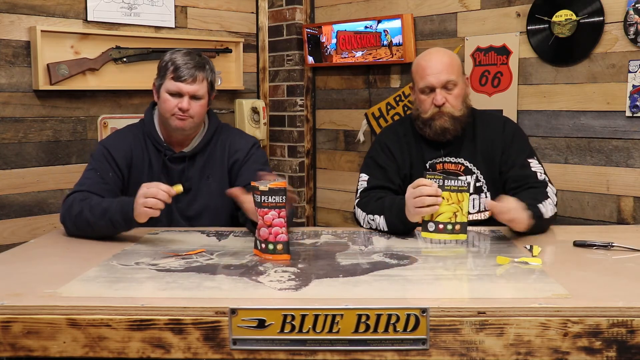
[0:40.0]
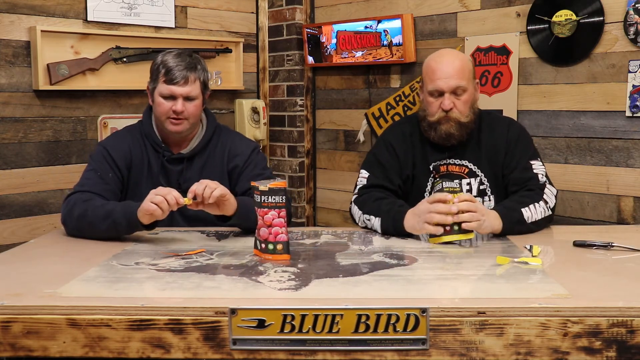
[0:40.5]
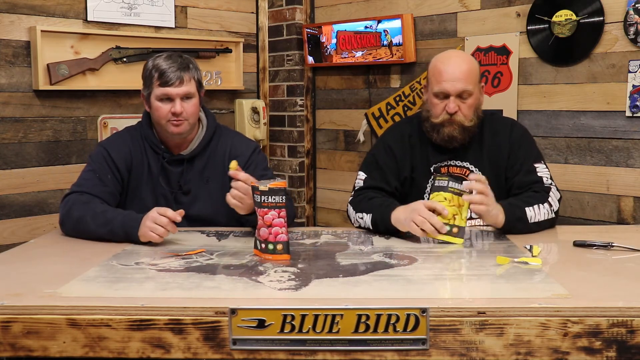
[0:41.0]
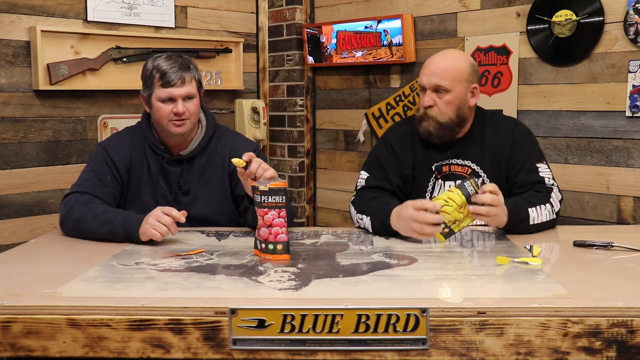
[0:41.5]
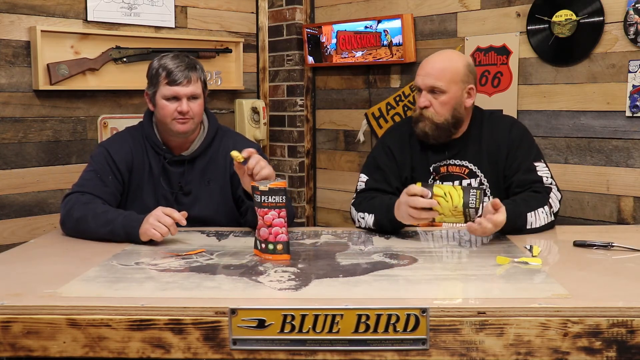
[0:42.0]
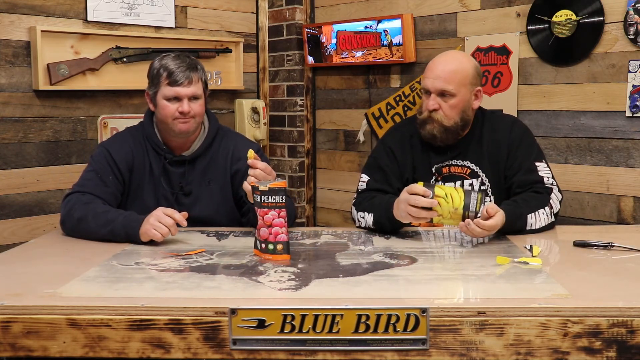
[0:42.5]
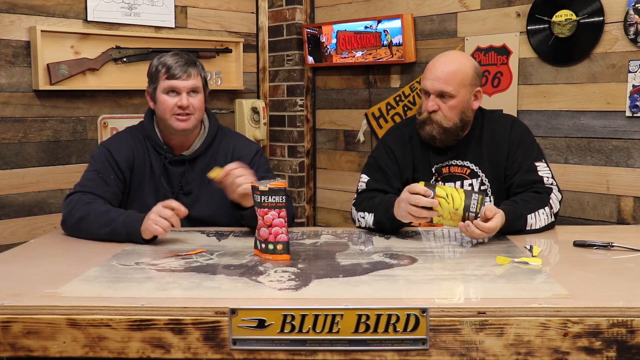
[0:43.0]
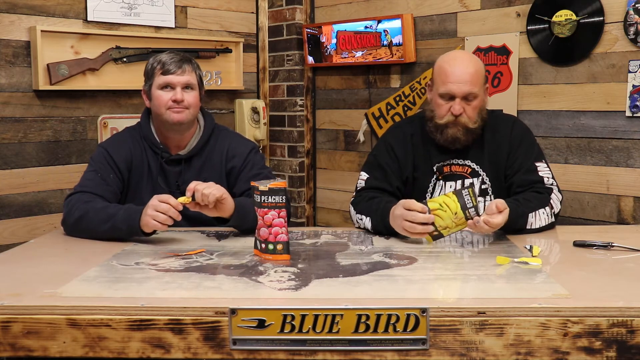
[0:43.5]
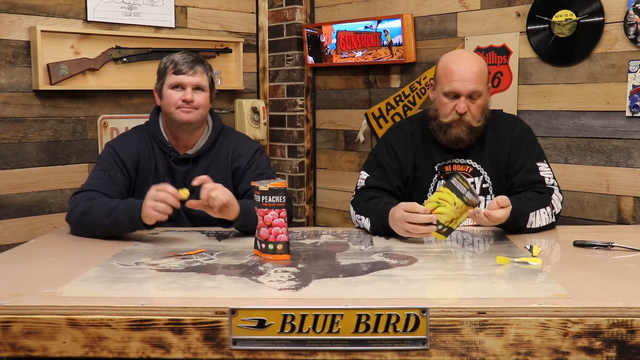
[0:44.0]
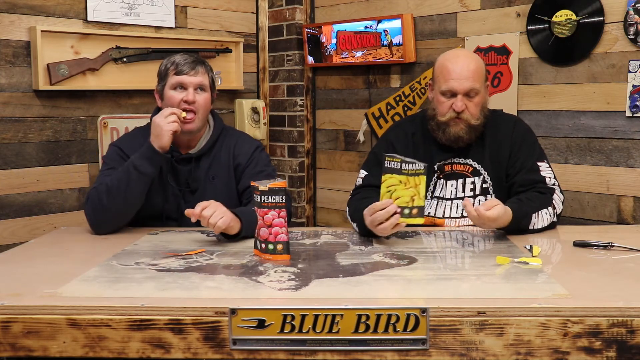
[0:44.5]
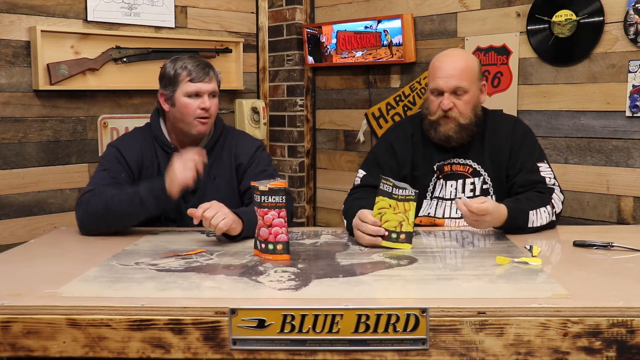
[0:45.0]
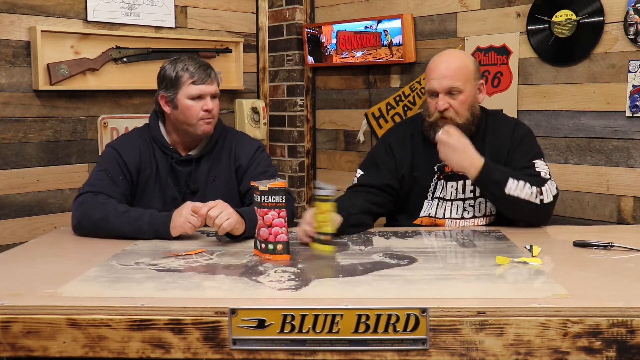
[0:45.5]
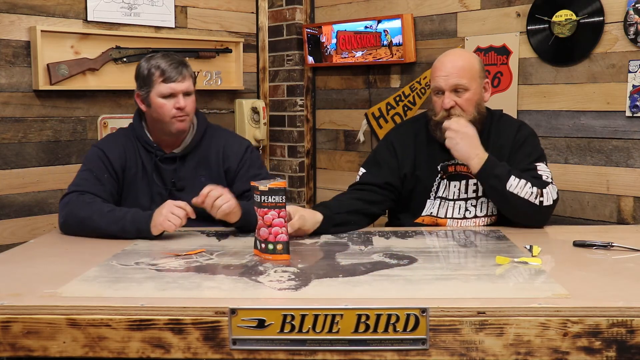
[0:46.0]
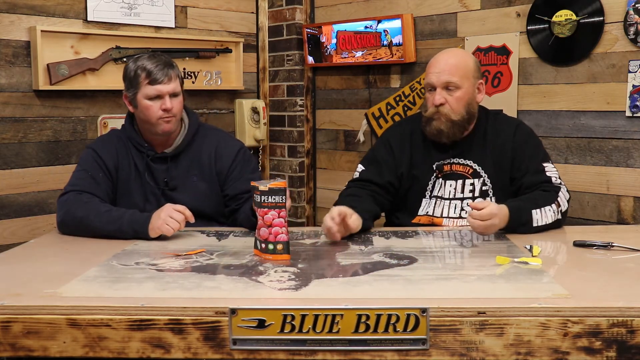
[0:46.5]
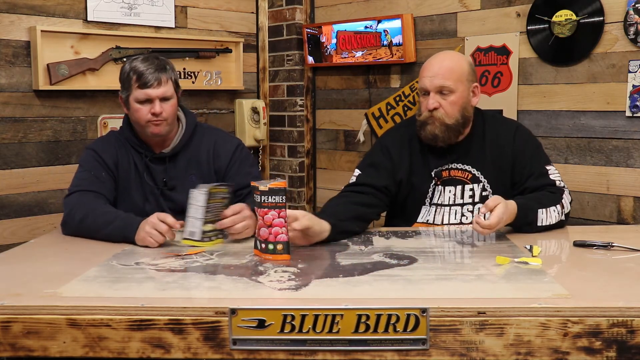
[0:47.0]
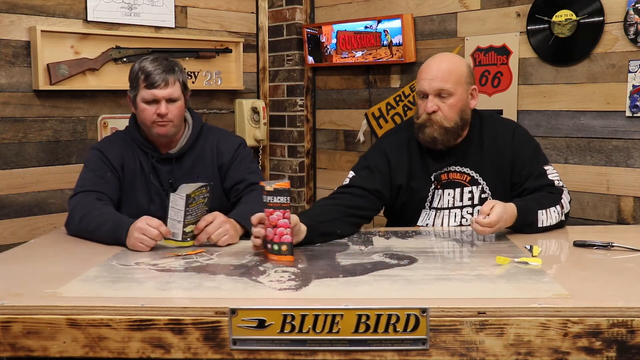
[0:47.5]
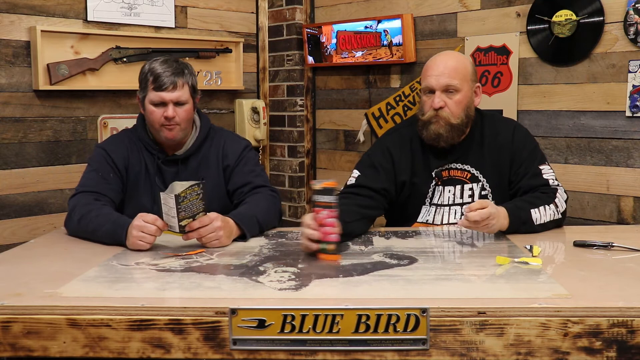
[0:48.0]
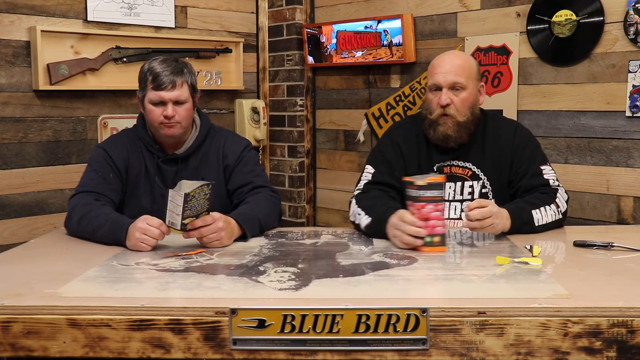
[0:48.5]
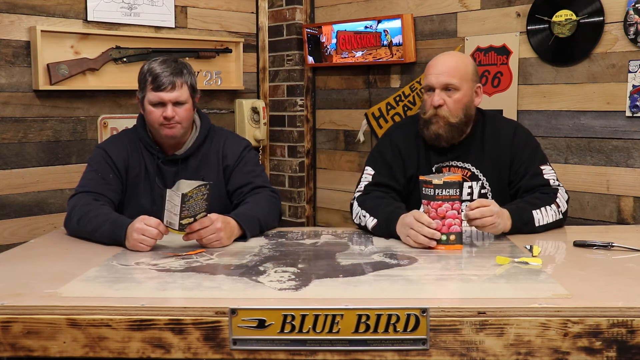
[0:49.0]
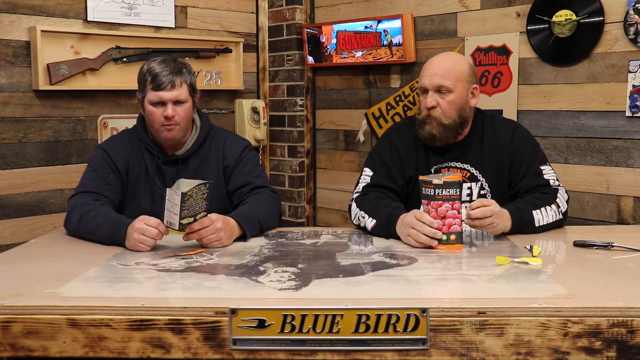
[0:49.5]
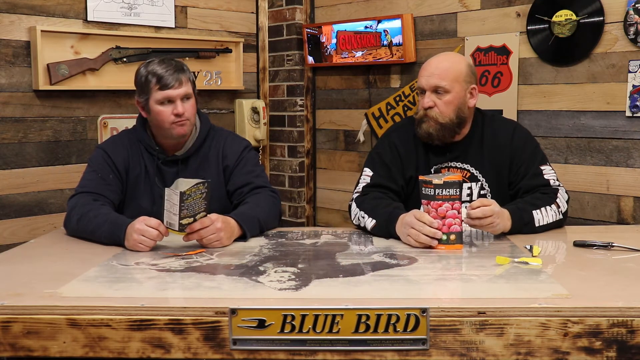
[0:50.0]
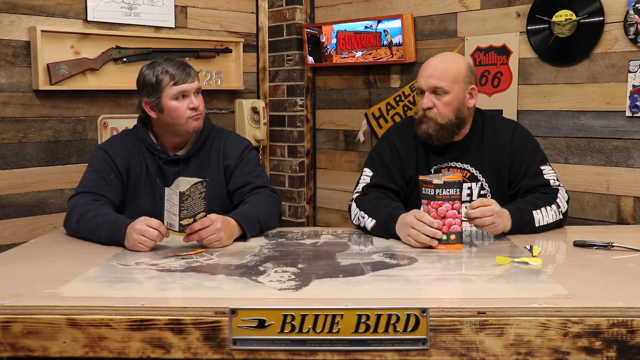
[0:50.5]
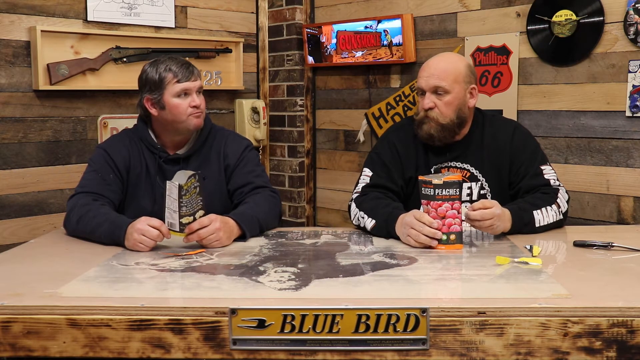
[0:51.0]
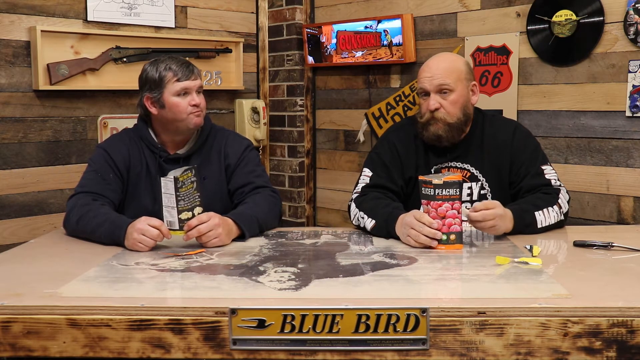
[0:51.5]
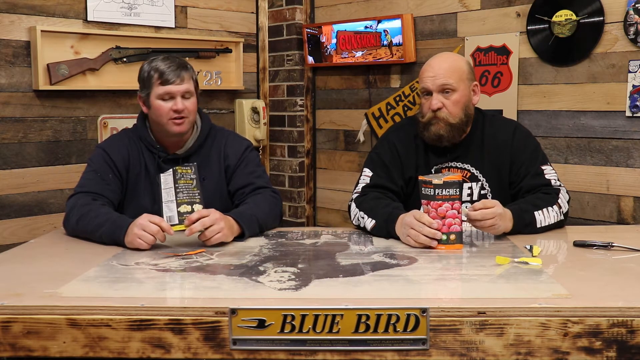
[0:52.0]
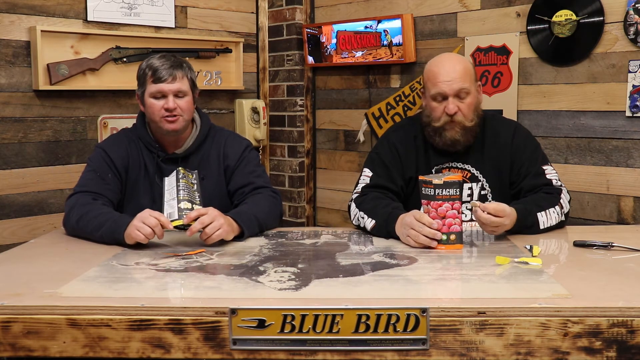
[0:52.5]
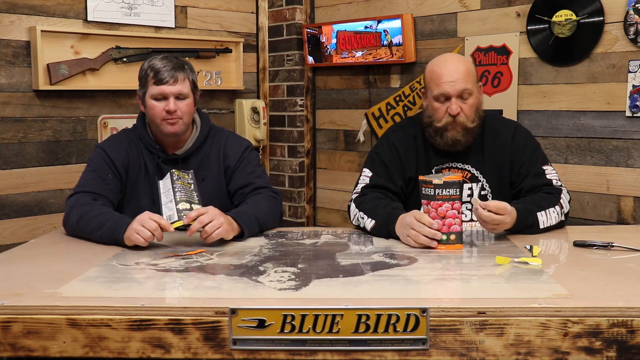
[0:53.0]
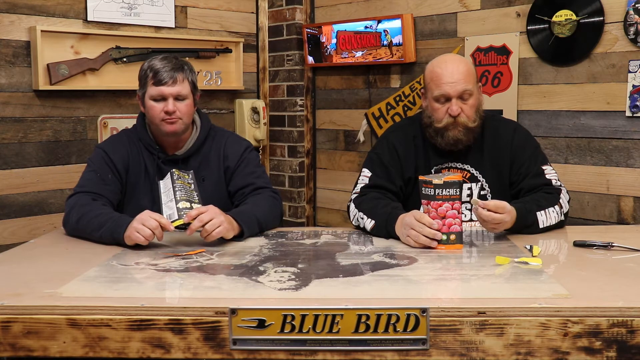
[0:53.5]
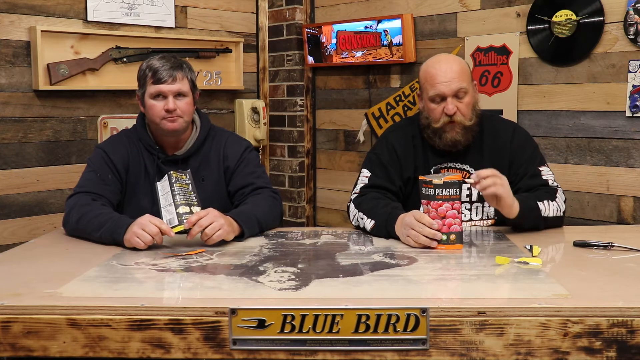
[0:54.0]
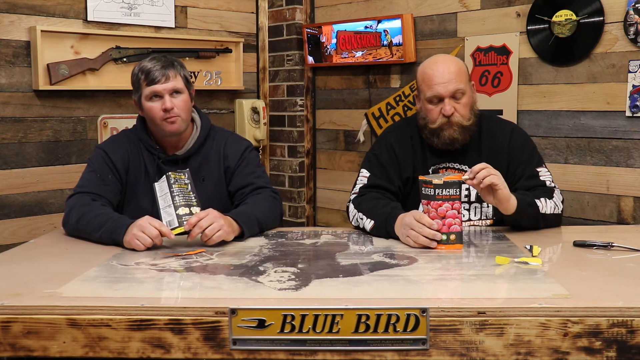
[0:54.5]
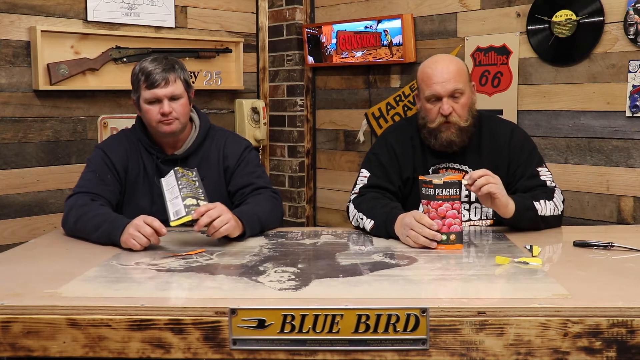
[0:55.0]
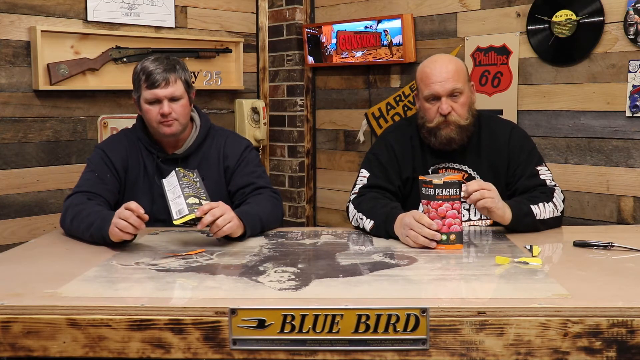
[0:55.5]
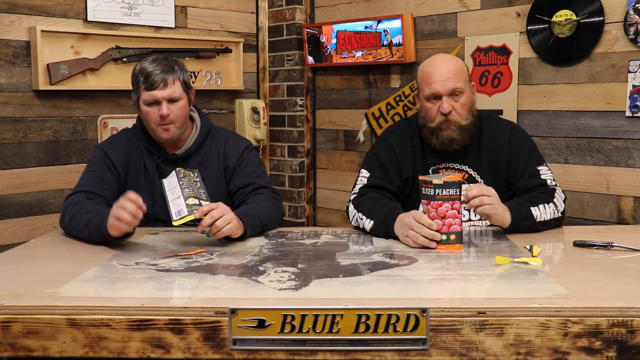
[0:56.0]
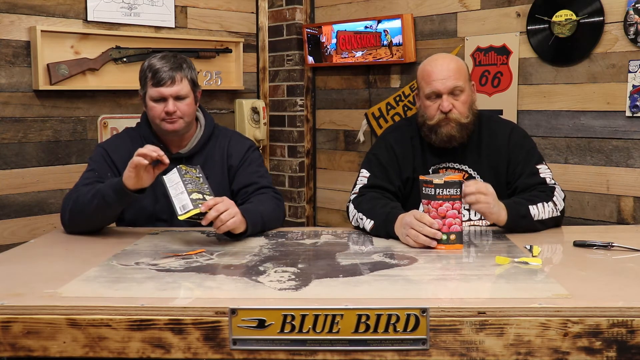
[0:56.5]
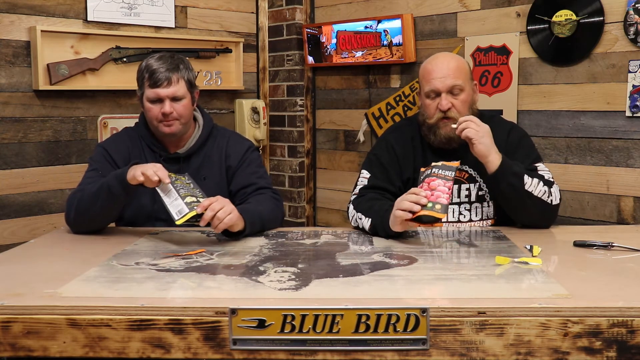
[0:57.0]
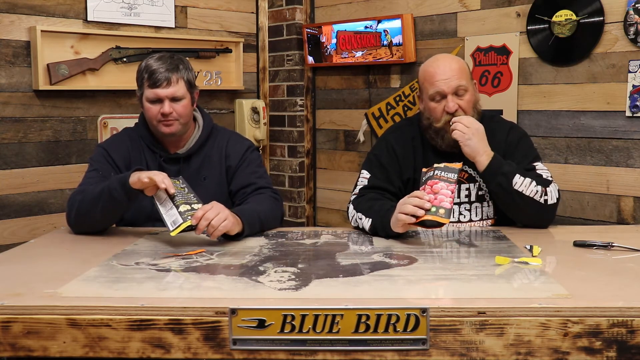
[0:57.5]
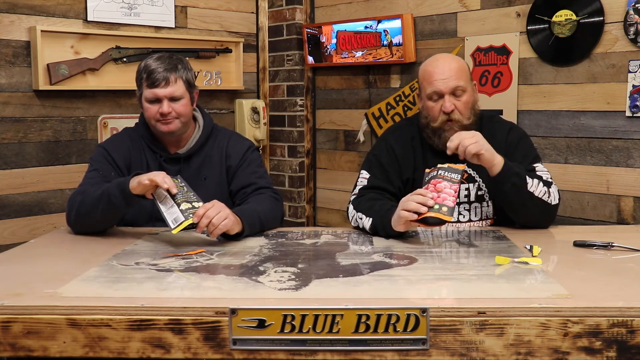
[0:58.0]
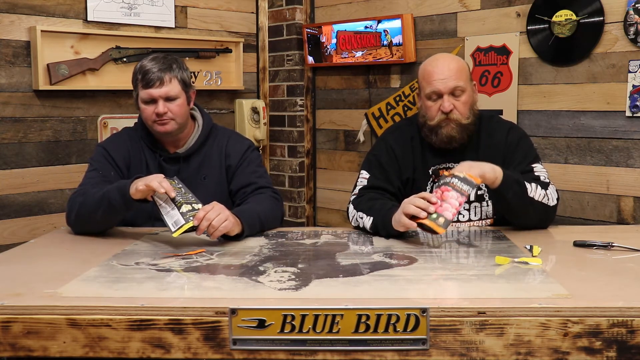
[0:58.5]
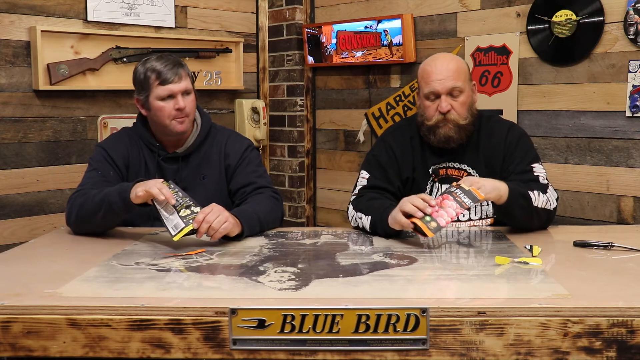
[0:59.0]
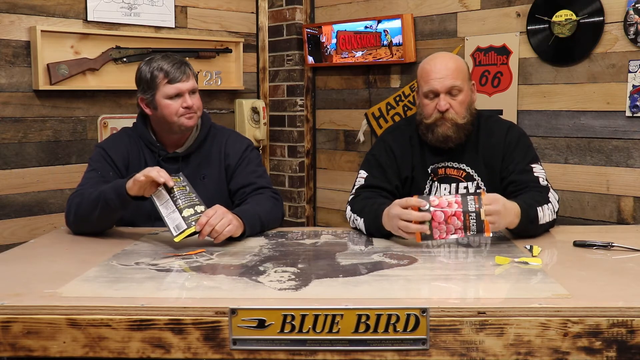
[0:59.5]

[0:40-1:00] The two men in black tops are at the table, with the rifle hung behind them, LPs hung behind them, and the sticker that says "blue bird" on the front of the table. An art picture is on top of the table, and one man's knife is lying on the table with the opened sachets, which seem to contain snacks or nuts. The men start eating the contents of the sachets, then swap the sachets, and each seems to taste what is inside the other's sachet, apparently trying different flavors of the snacks.